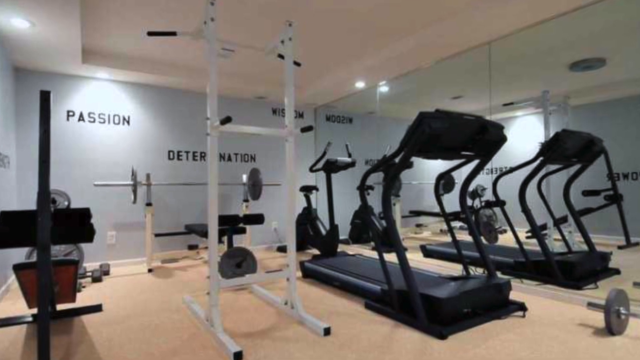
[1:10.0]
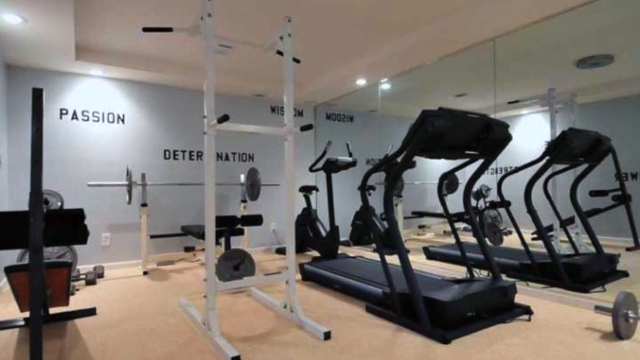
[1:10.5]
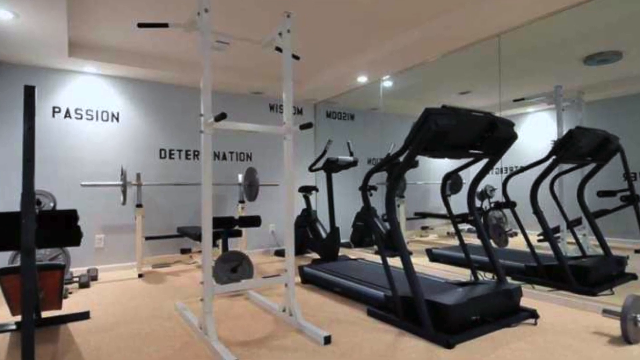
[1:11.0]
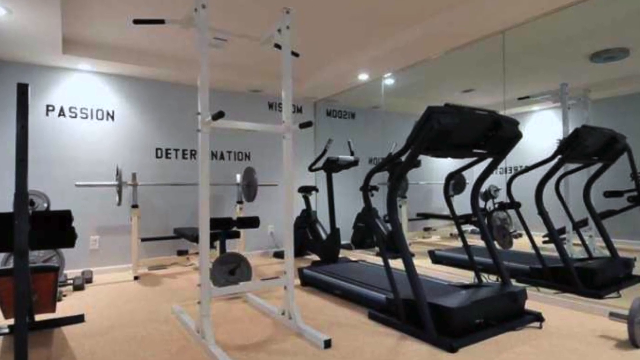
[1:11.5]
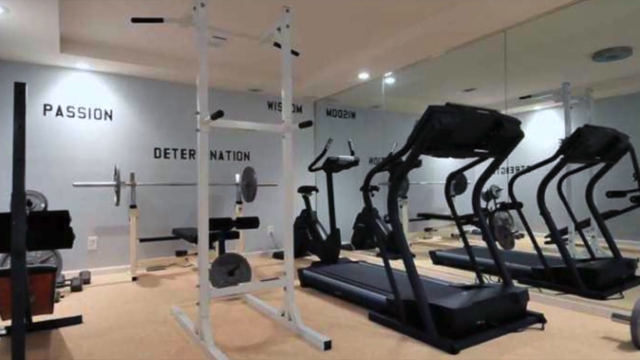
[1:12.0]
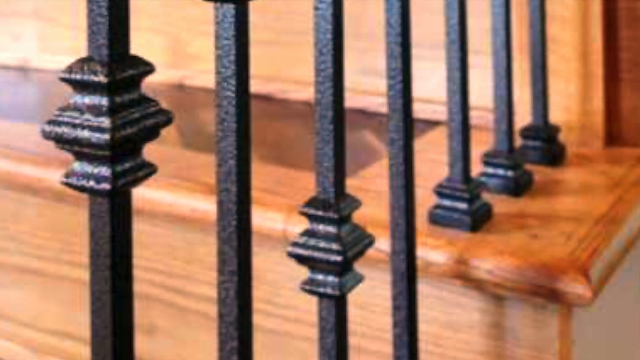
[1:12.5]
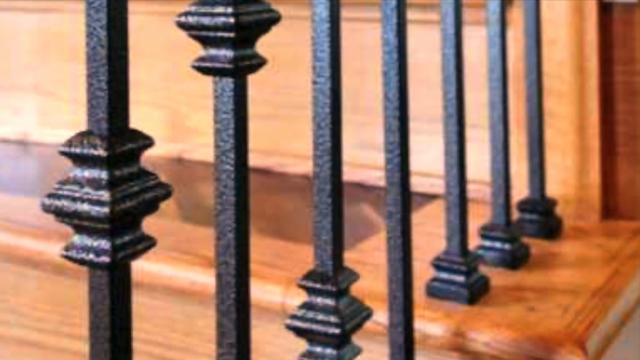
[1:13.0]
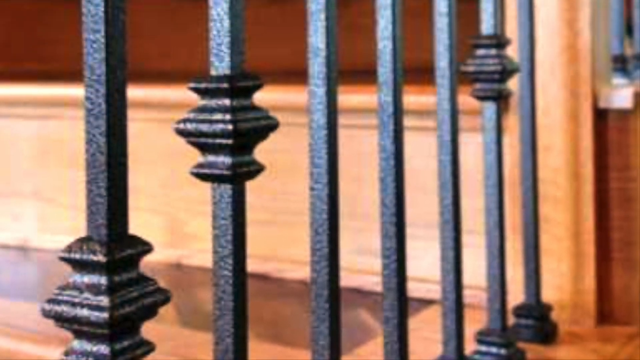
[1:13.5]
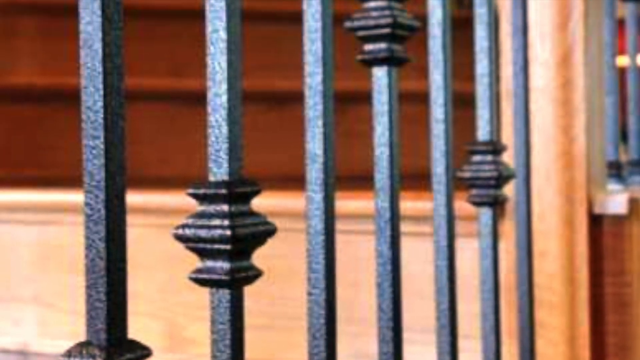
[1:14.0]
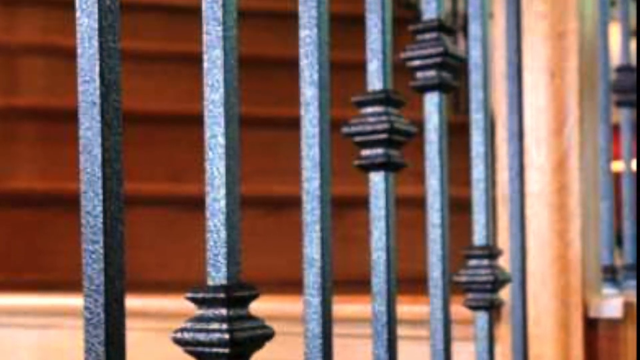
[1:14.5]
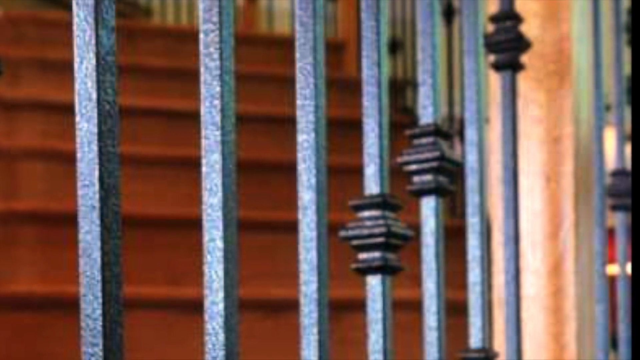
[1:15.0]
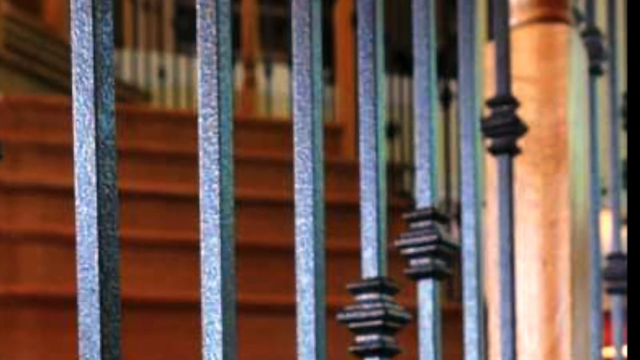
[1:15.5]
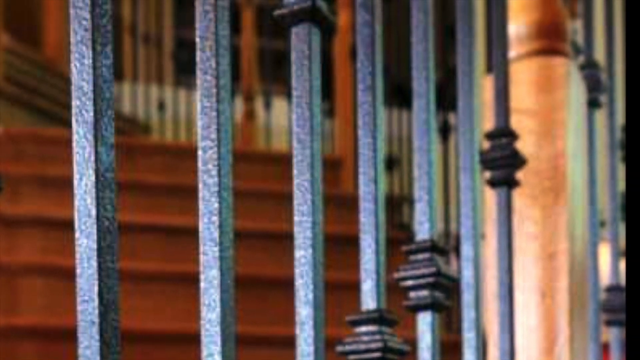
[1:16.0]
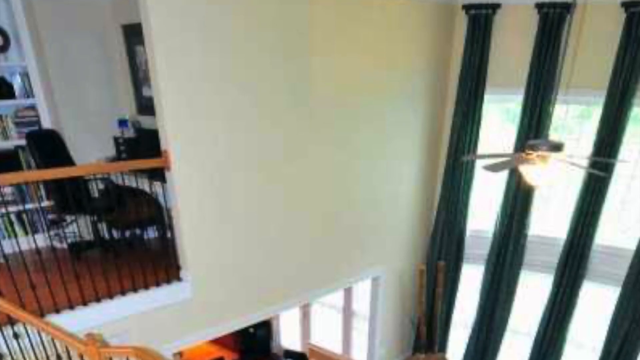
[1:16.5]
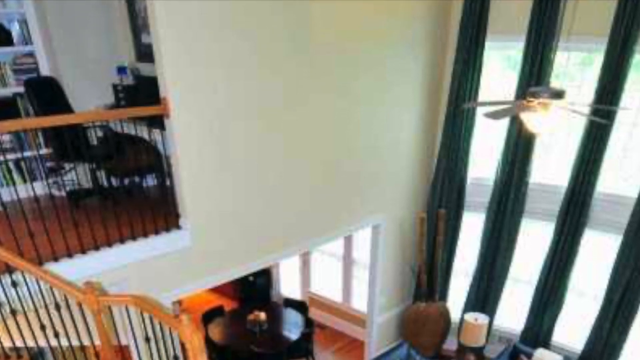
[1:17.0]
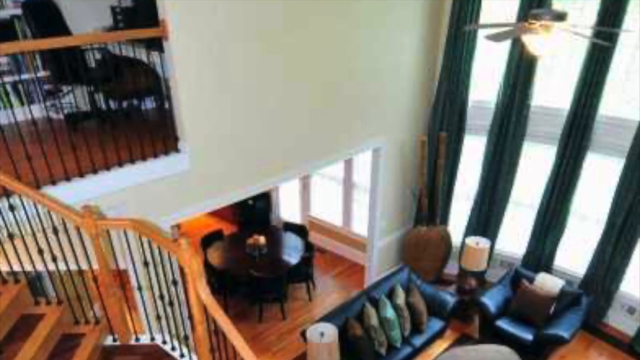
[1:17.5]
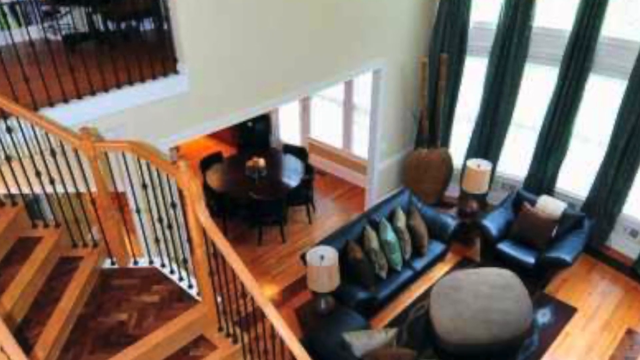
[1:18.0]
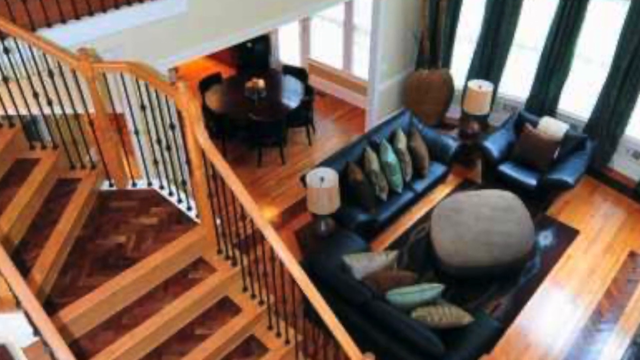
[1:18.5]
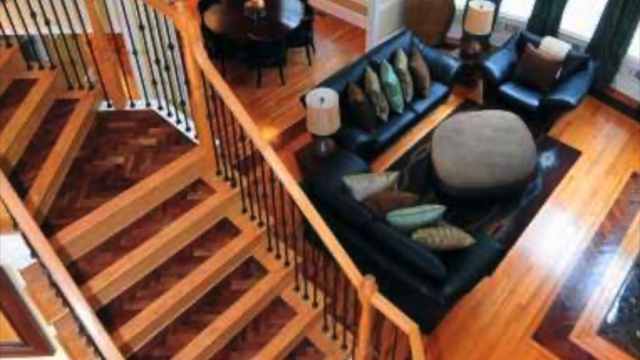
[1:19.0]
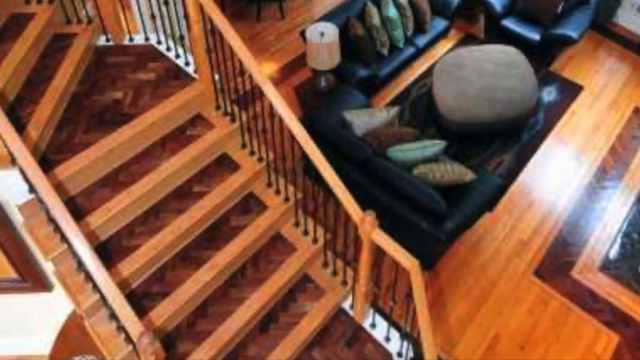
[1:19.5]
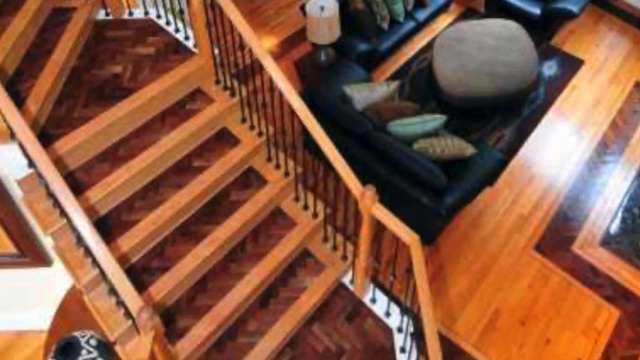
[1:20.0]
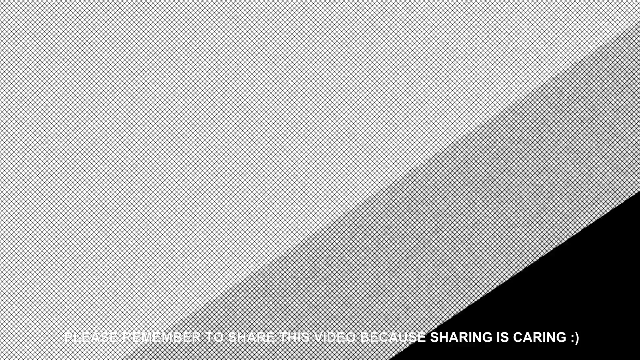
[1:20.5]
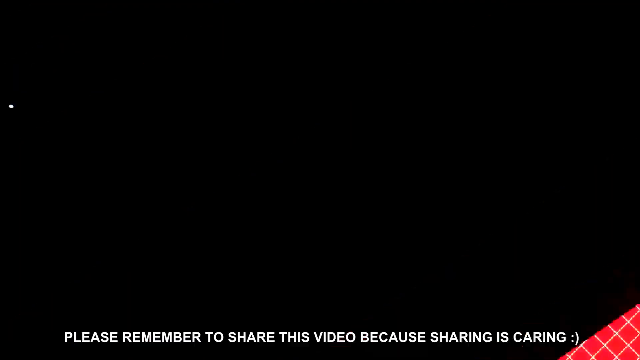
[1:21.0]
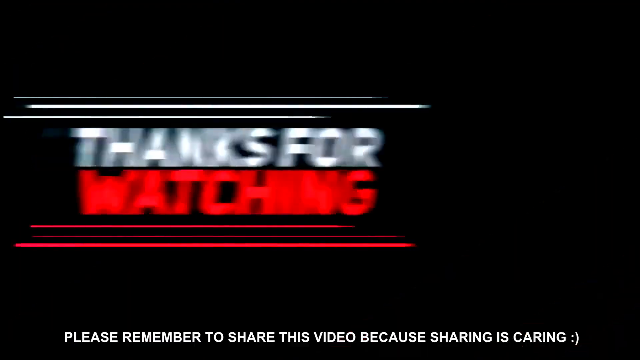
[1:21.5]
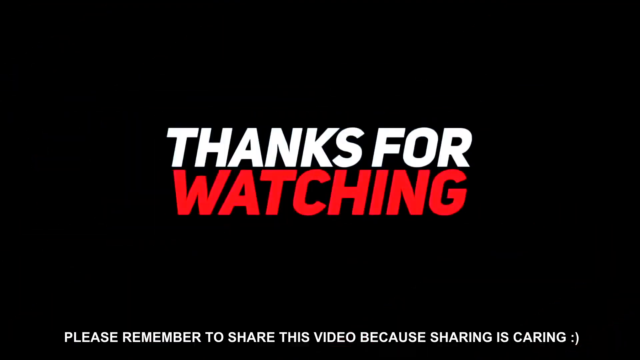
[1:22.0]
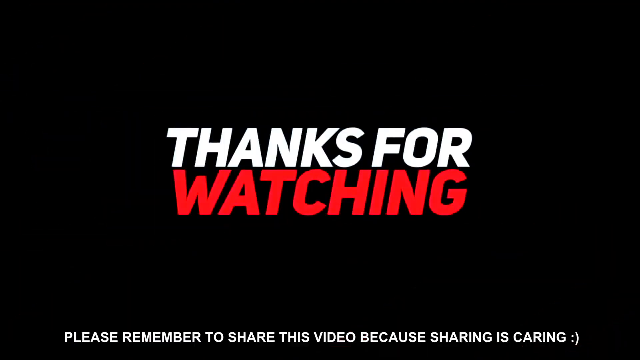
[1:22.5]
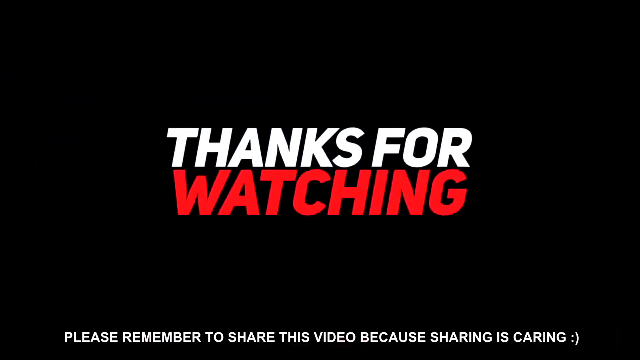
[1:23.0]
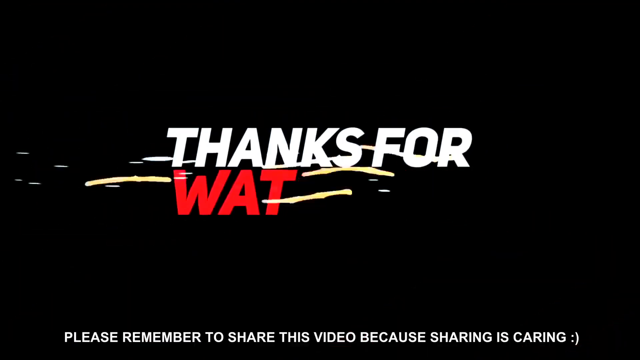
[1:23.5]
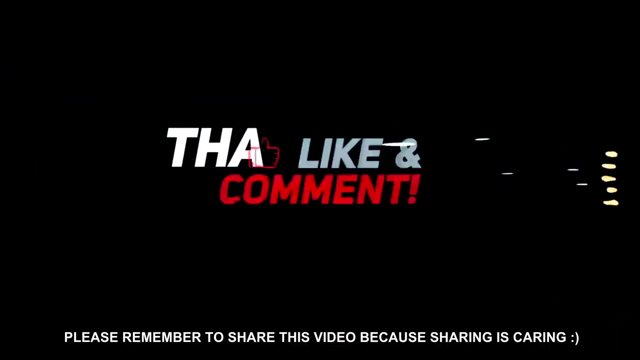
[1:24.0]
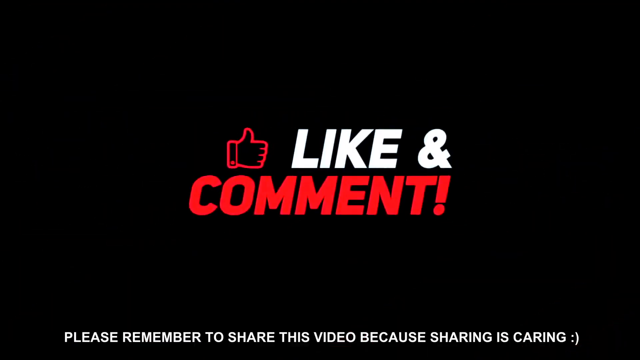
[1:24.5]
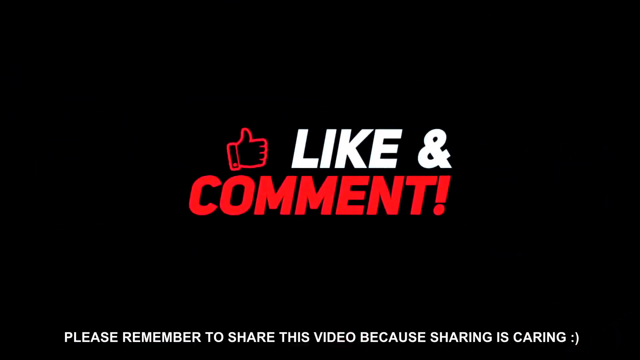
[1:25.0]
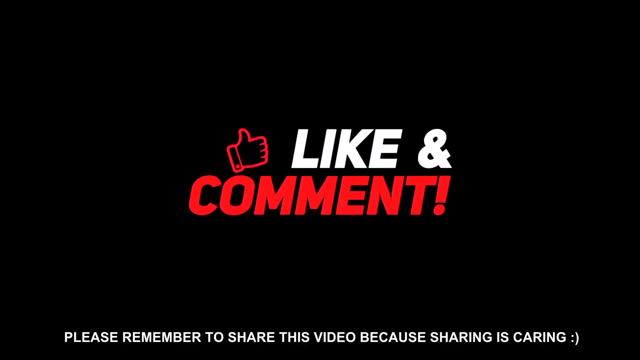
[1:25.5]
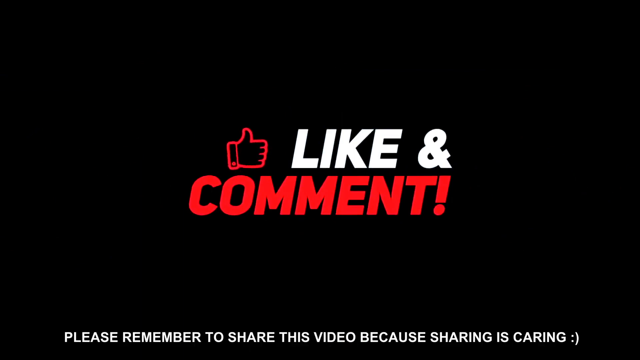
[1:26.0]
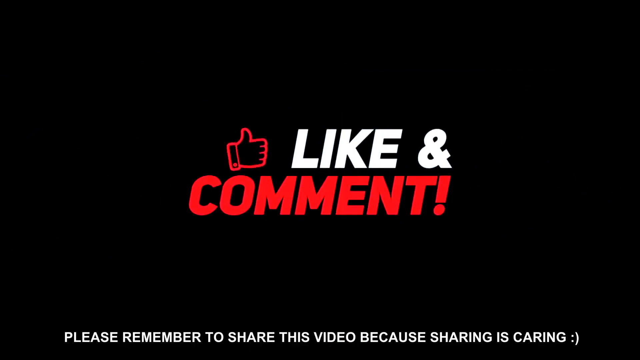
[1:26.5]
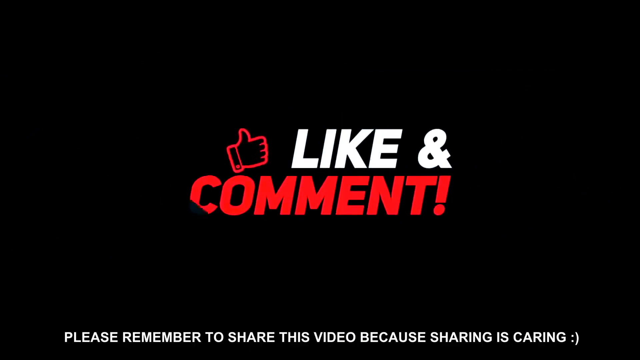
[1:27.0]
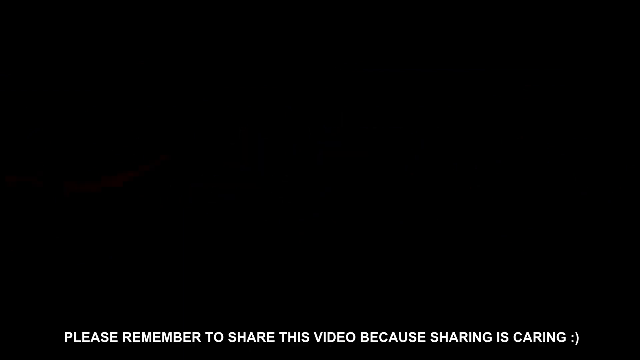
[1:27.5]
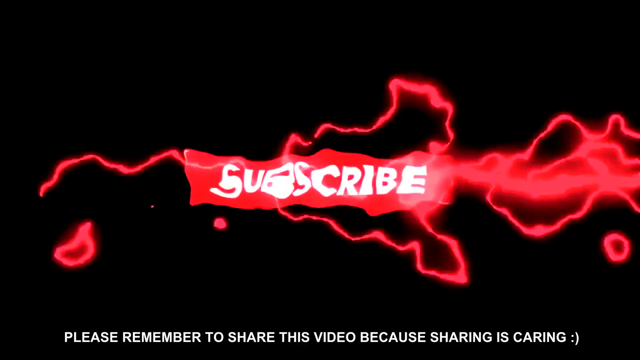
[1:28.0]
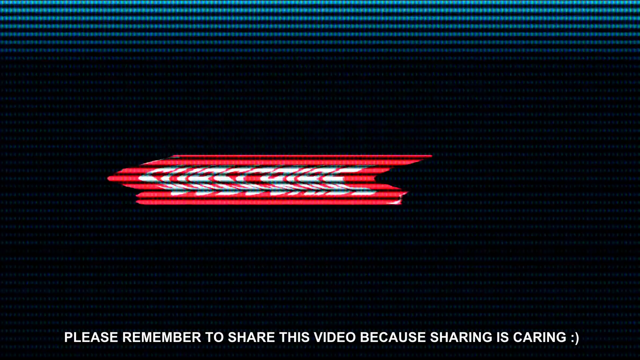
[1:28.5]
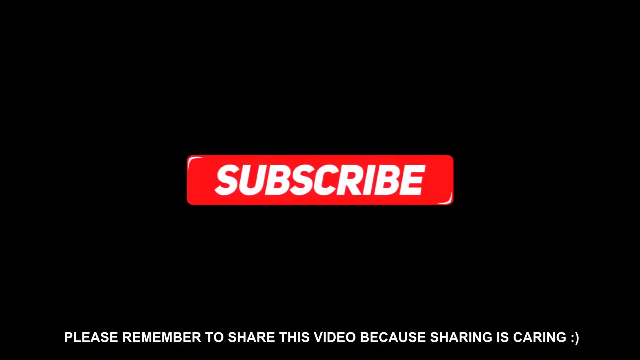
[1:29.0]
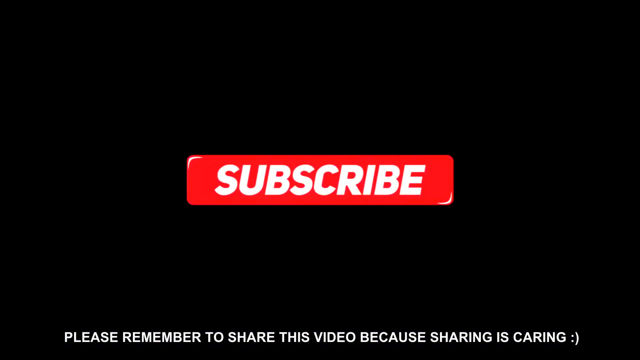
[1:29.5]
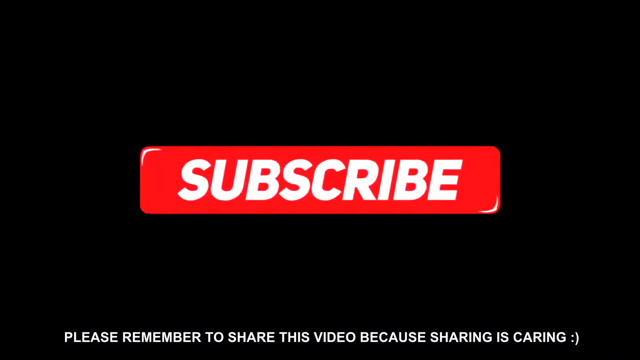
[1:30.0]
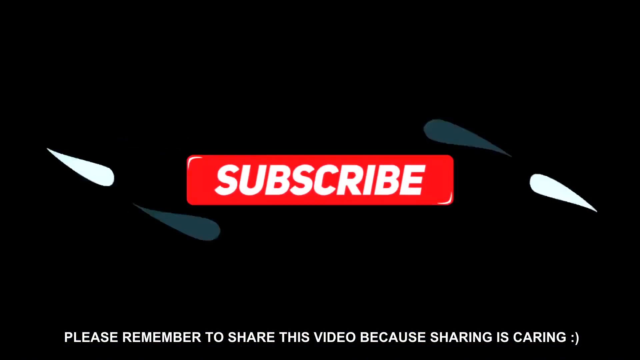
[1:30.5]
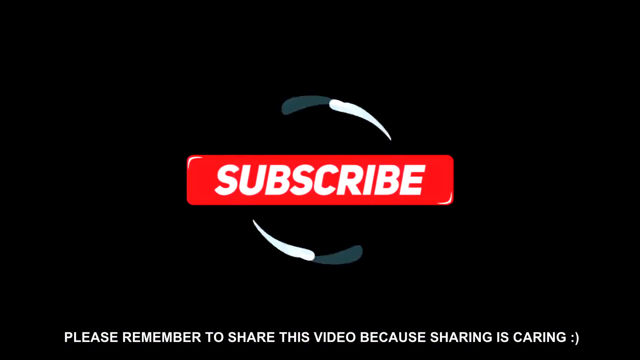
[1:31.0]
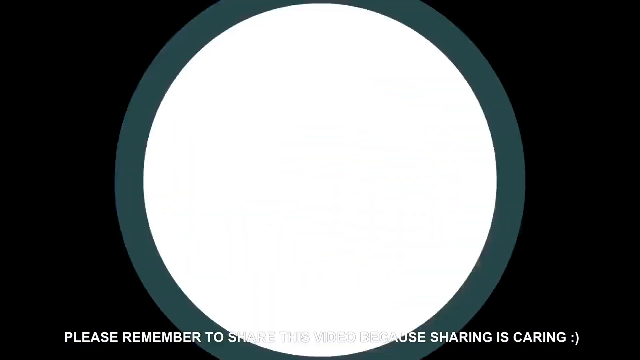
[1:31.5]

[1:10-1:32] A gym has a grey-painted wall with words such as "passion," "determination," and "wisdom" written on it in bold black. The gym has two treadmills, lifting benches, free weights and dumbbells, an incline bench, a cycling machine, a chin-up bar and other fitness equipment, plus a large floor-to-ceiling mirror on one side of the wall. It has a white ceiling and overhead lighting. The scene transitions to a staircase, shown from below and above, followed by a close-up of the metal bannisters and wooden railing. The video ends with a title card that says "Thanks for watching," with "Please remember to share this video, because sharing is caring" at the bottom, followed by graphics showing the words "like and comment" and a text box reading "subscribe," with animations transitioning between these words.